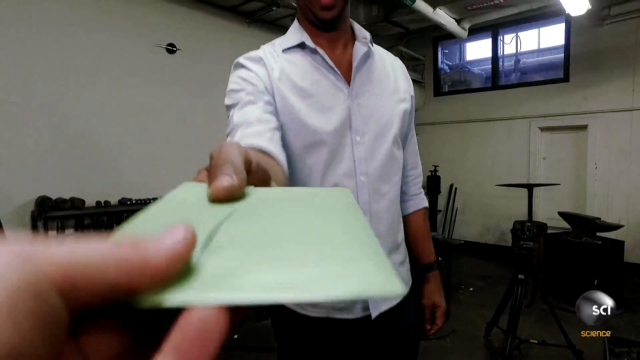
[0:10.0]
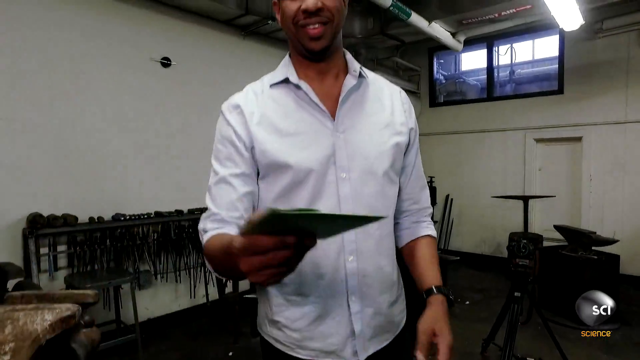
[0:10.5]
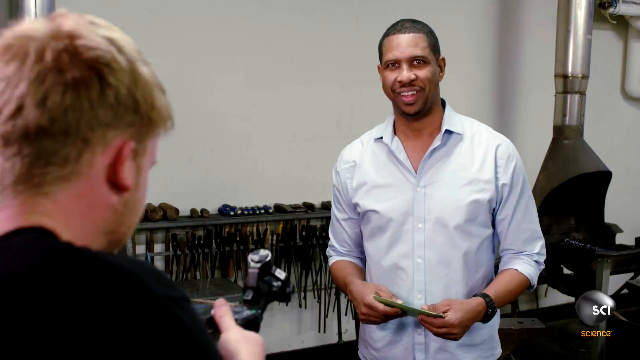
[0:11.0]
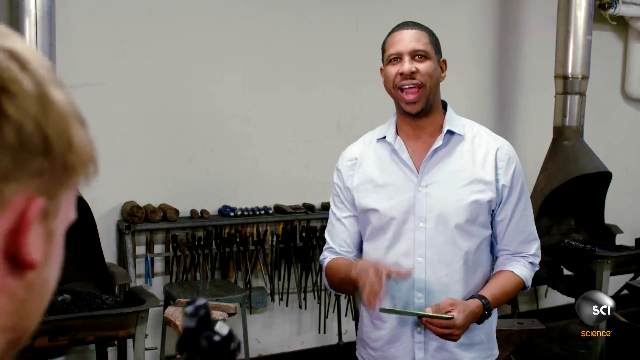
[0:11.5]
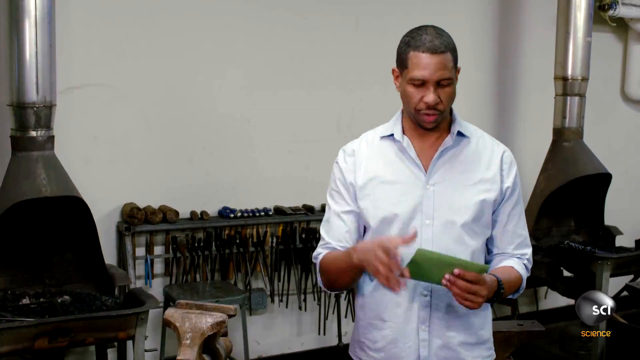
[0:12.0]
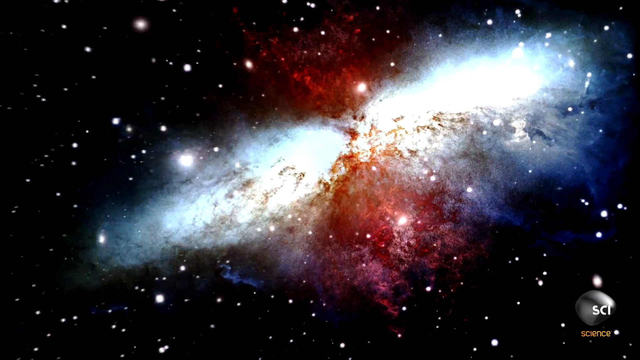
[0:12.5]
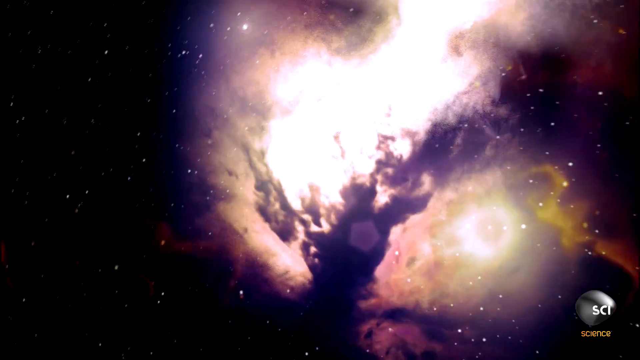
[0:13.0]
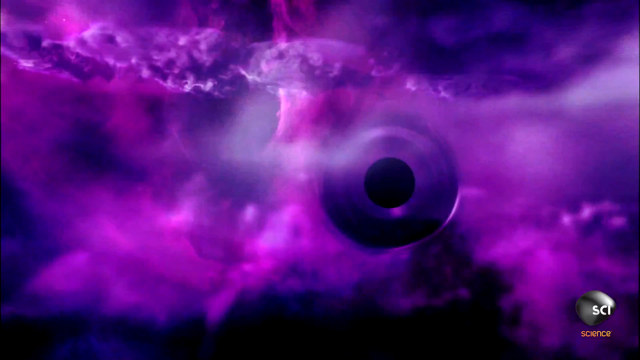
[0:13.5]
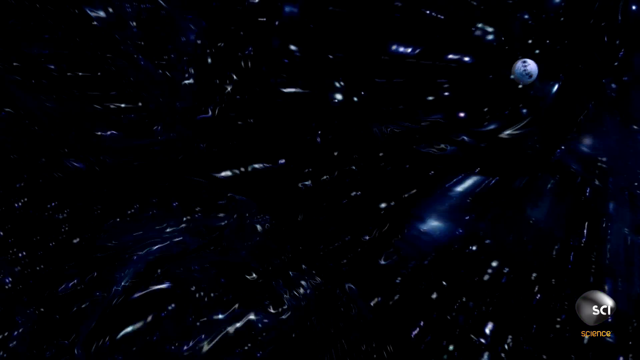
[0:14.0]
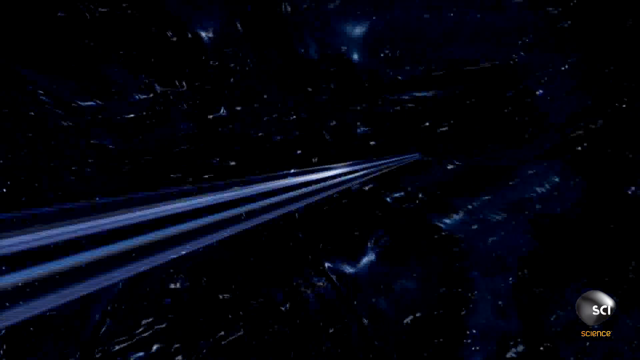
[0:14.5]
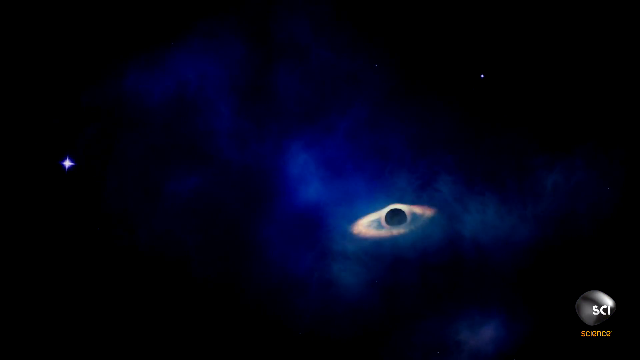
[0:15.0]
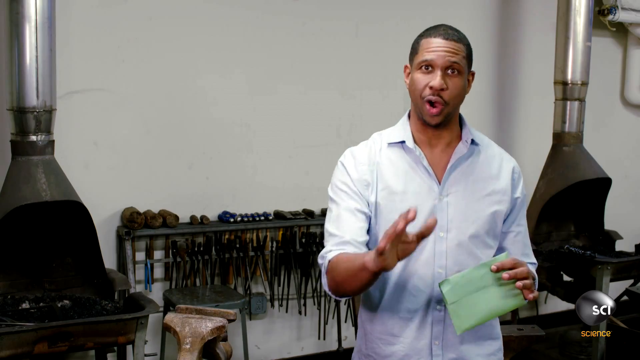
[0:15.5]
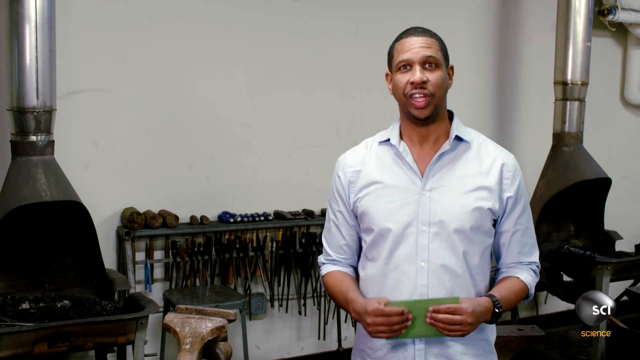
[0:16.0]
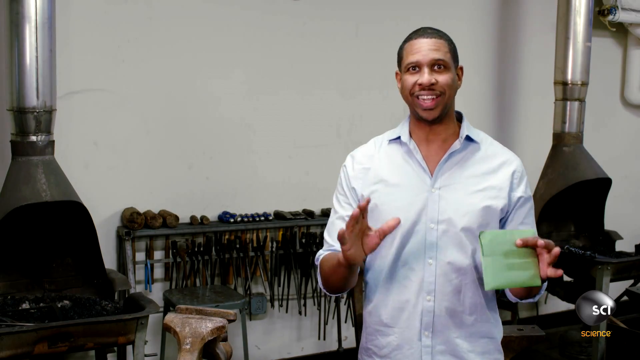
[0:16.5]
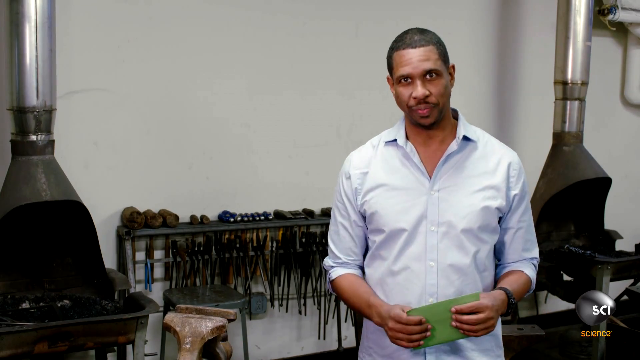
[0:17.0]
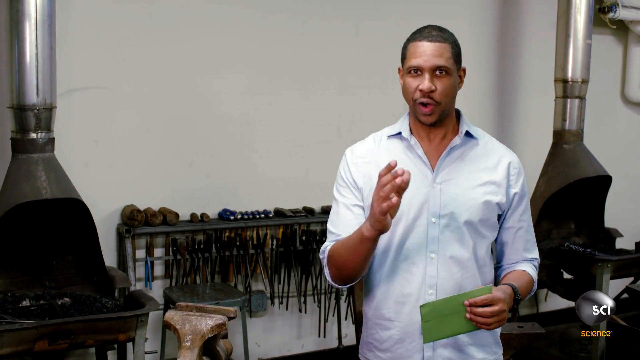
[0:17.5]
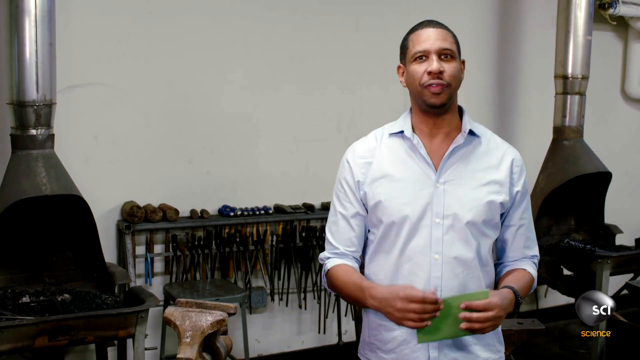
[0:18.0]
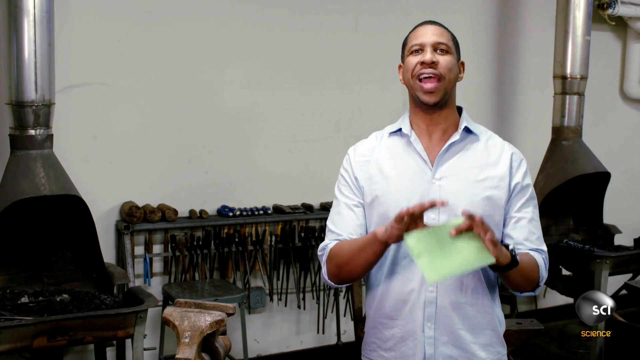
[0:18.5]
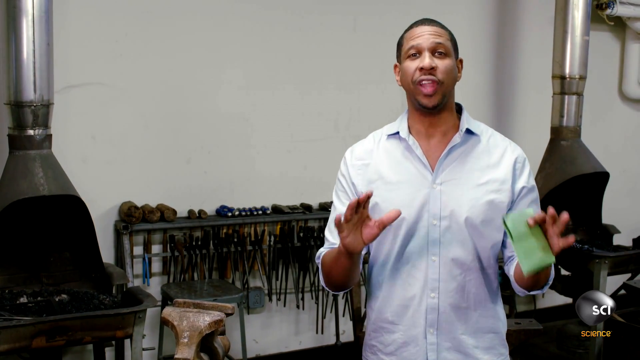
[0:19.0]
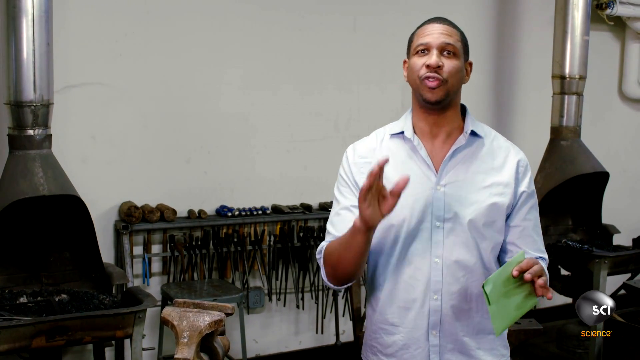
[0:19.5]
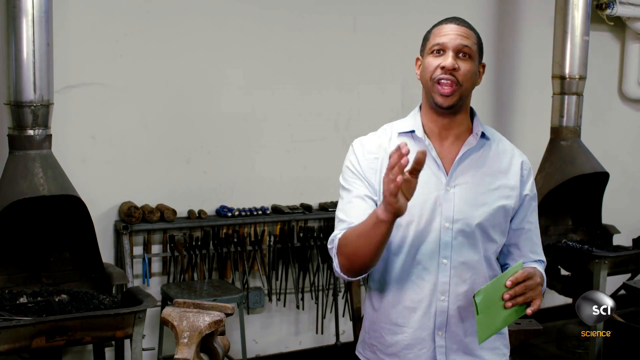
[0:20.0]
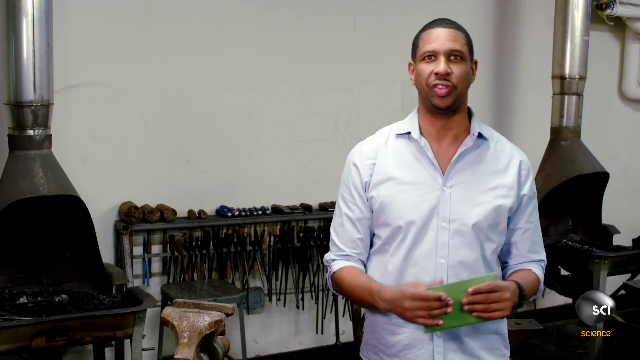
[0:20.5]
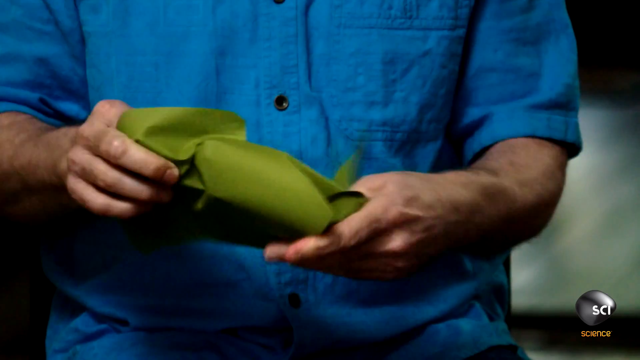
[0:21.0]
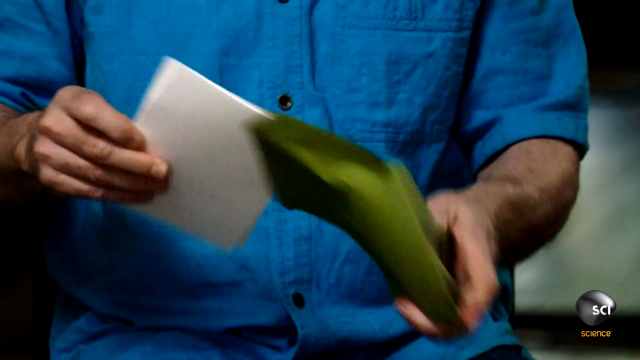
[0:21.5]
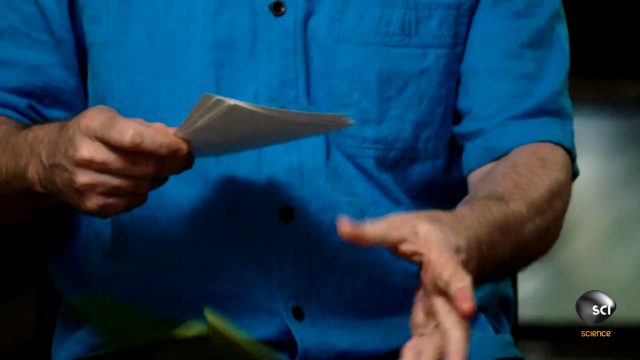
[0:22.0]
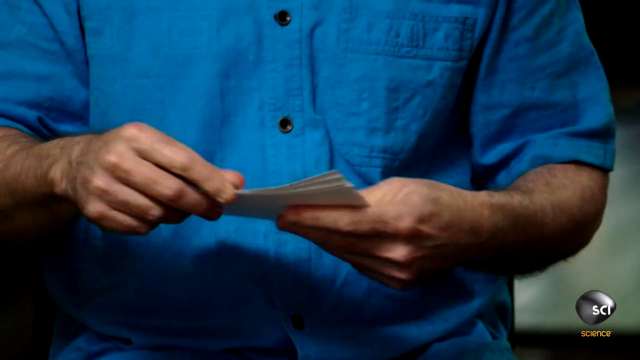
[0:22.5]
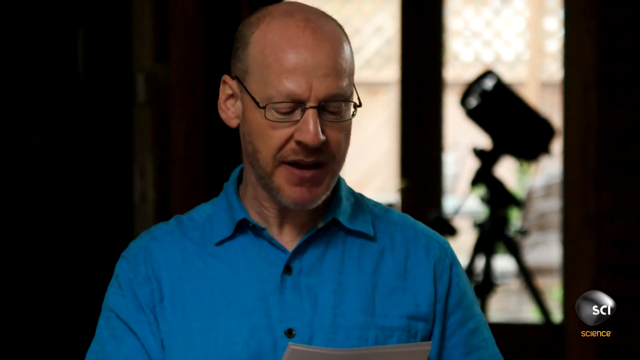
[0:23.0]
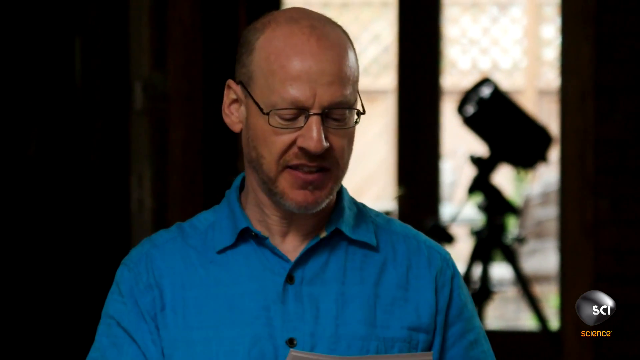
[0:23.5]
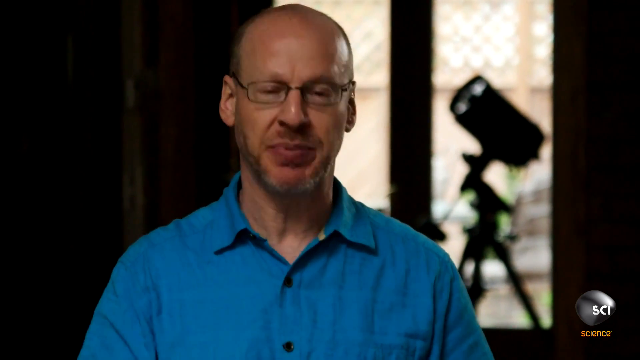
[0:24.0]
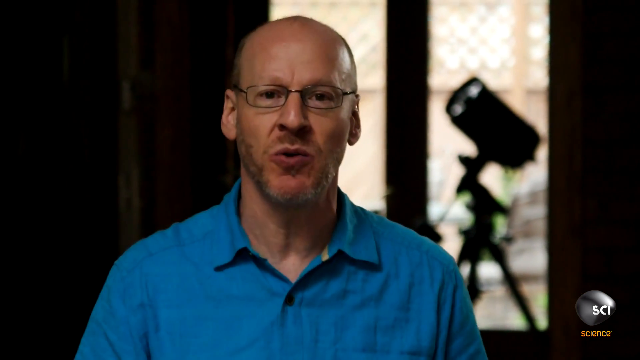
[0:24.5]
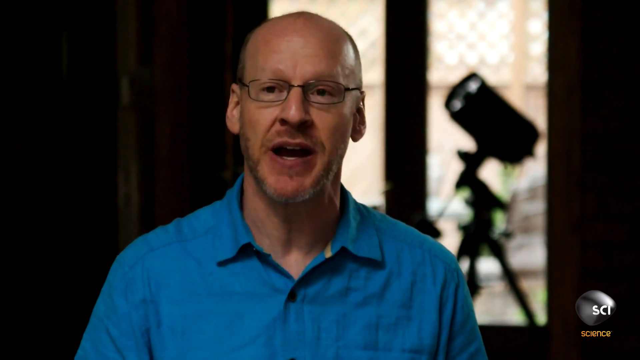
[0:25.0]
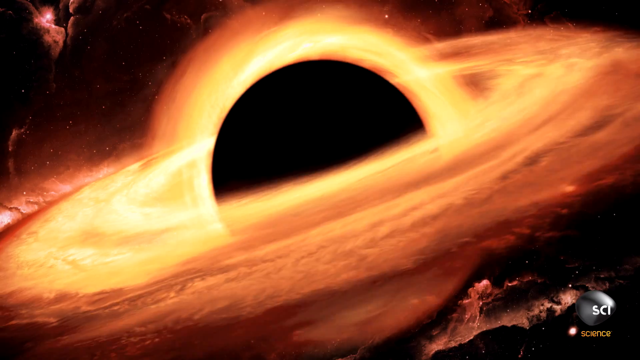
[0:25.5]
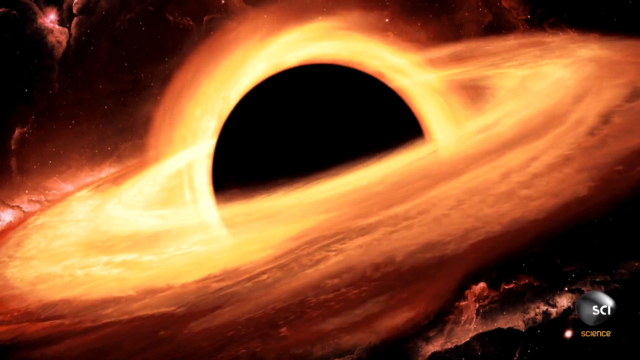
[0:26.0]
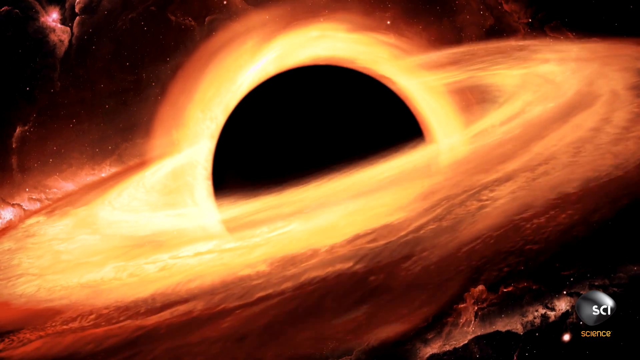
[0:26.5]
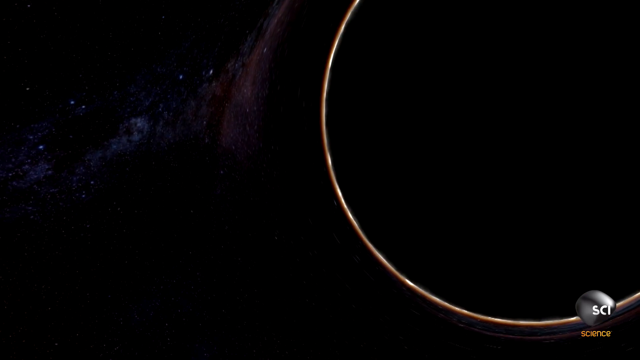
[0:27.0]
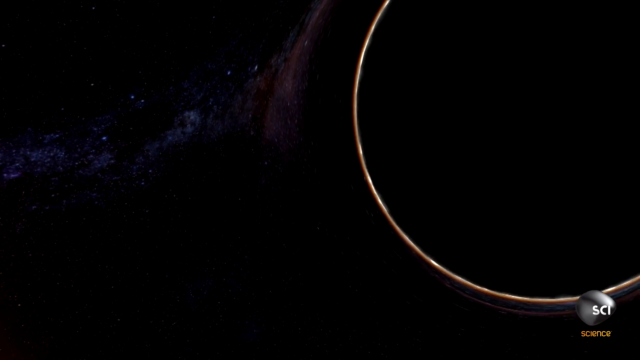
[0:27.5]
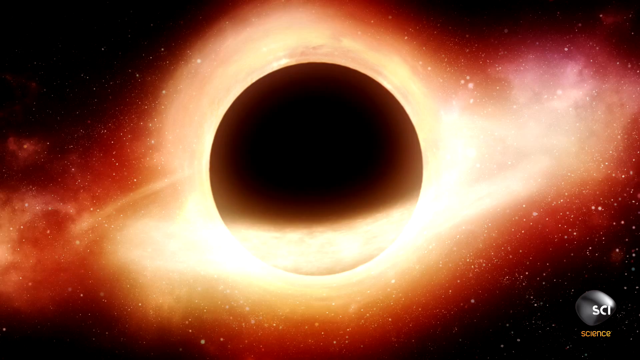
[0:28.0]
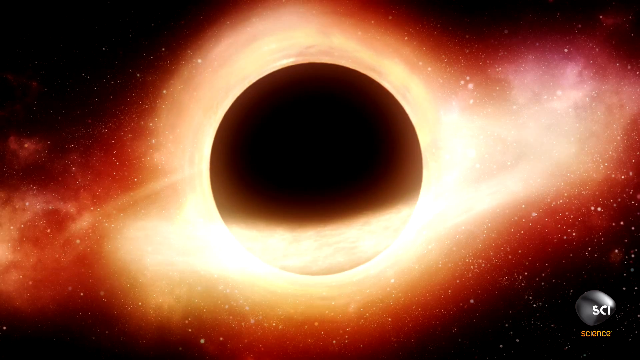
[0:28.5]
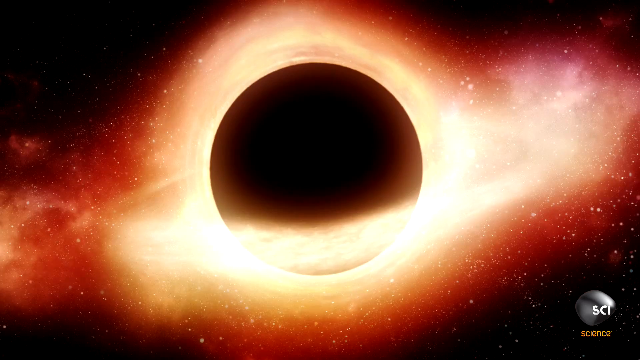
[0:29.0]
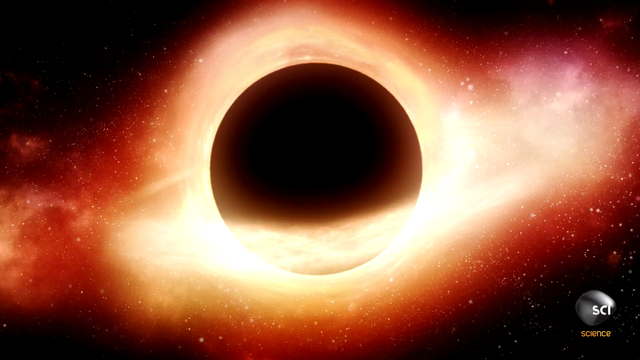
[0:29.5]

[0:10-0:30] A man stands in an ordinary-looking room, wearing a white shirt and a watch on his left wrist. He faces the camera, holding a green envelope in his right hand, while a hand from another person opposite him also holds the envelope. The camera pans up to reveal the man's face as he takes the envelope and smiles. The angle changes to show the man with the camera alongside the man in the white shirt; the camera operator has red hair and a dark shirt and is seen from behind as they move out of view through the left side of the frame. The man in the white shirt says a few words, raises his right hand to point, and then looks down at the envelope. Several quick shots of space follow: a red and blue illuminated solar system, purple gas clouds, a purple object moving leftward, and a dark object shooting to the left. Back in the room, the man in the white shirt puts his left hand up as if to caution the viewer while holding the green envelope or paper in his right hand. He nods and thrusts both hands down to emphasize his words, talking in an excited manner. The video shifts to a man in a blue shirt holding a green envelope. He draws white paper out of the envelope, pinches the paper between the fingers of his right hand while discarding the envelope with his left, and then holds the pieces of paper in both hands. The angle shifts to show his face: he is bald and wears glasses. He looks down at the paper and says a few words before looking toward the camera and continuing to speak. Behind him, the silhouette of a telescope is visible. The video shifts to a 3D representation of a black hole, then to a second black hole as the view pans left and away from it, and then to another 3D representation of a black hole.